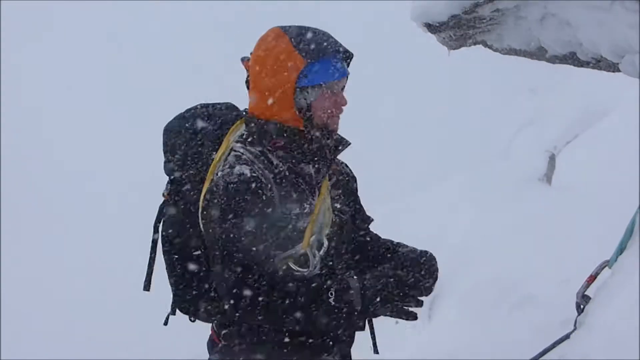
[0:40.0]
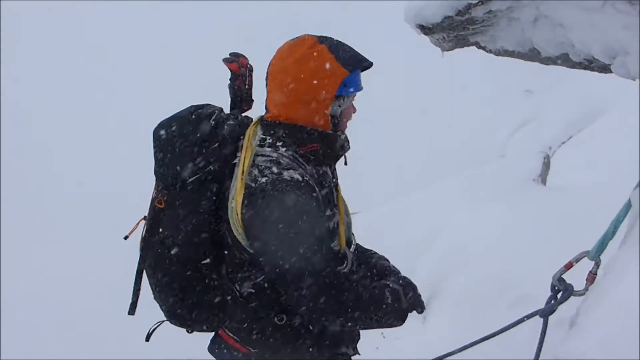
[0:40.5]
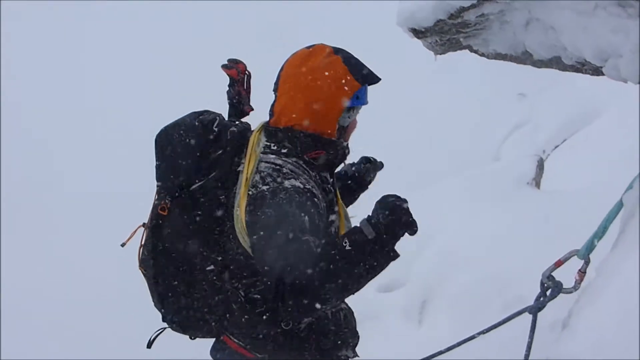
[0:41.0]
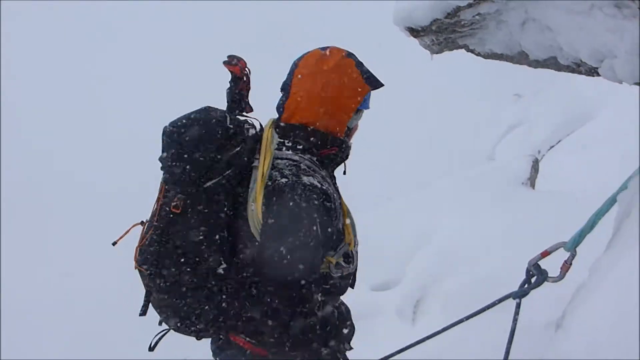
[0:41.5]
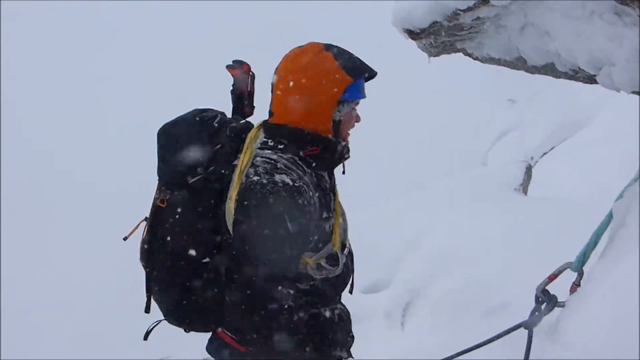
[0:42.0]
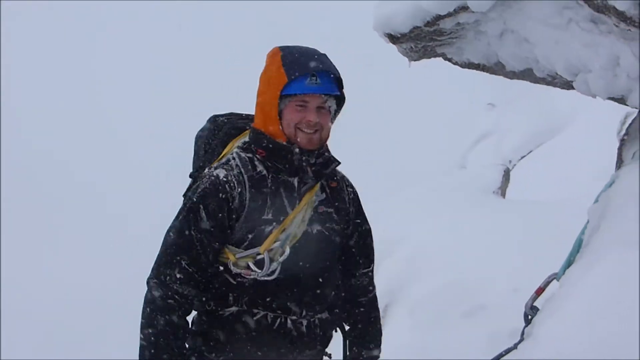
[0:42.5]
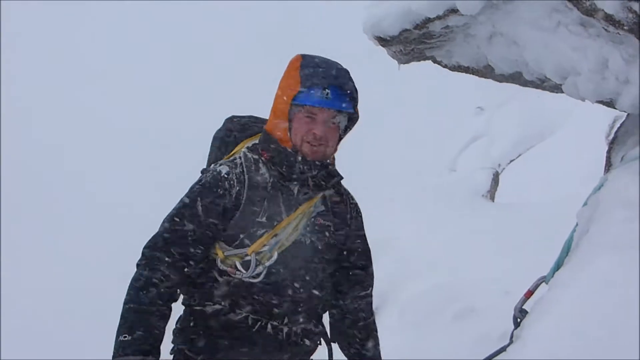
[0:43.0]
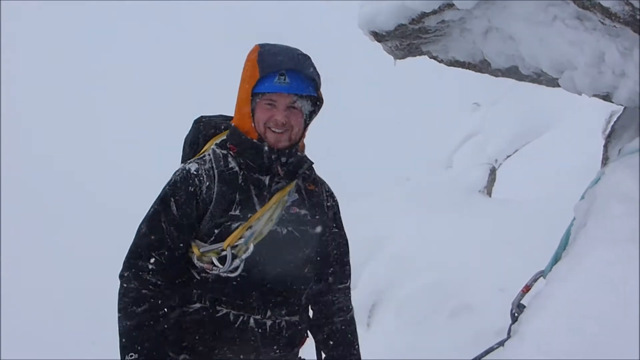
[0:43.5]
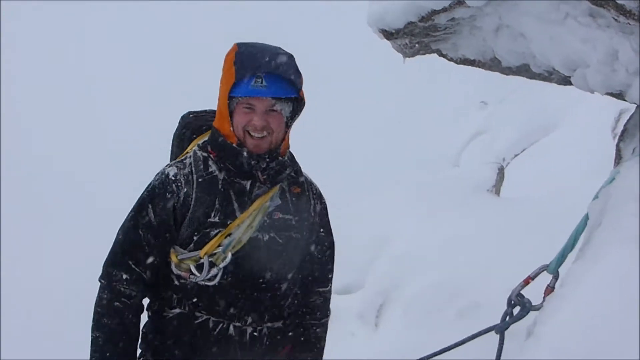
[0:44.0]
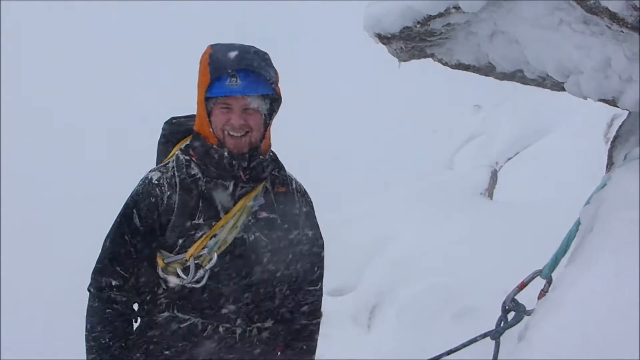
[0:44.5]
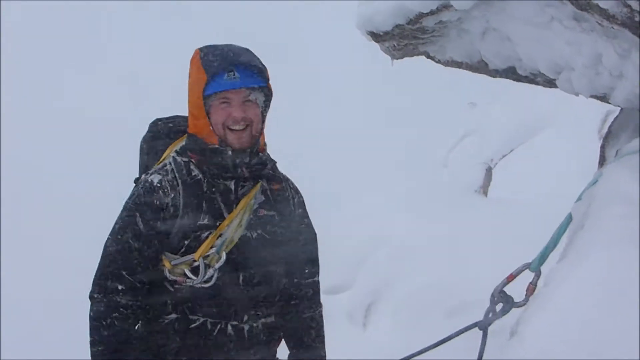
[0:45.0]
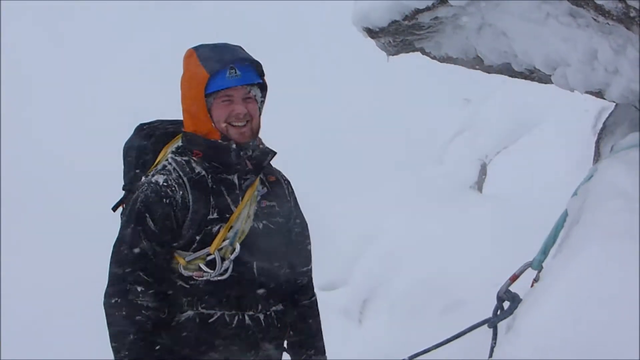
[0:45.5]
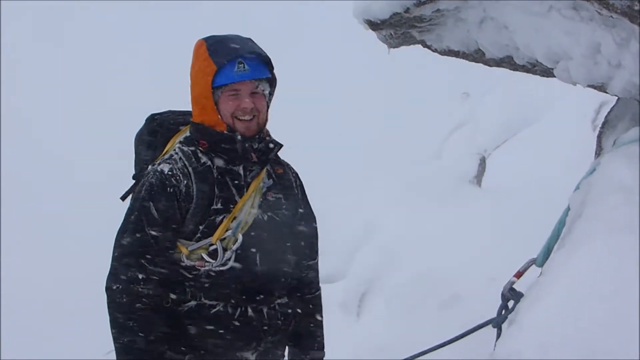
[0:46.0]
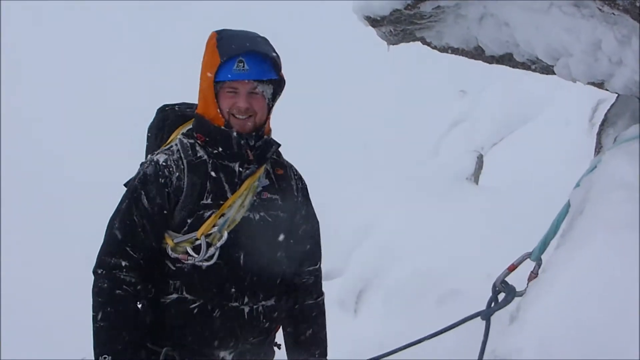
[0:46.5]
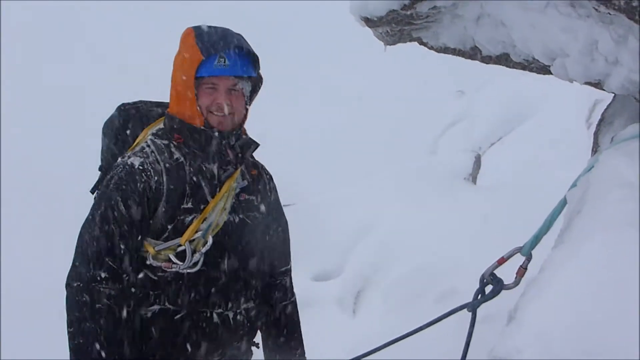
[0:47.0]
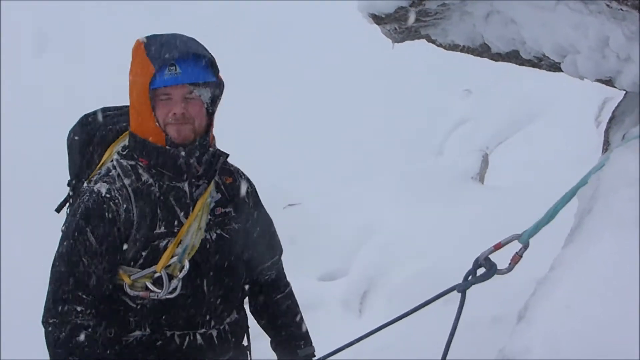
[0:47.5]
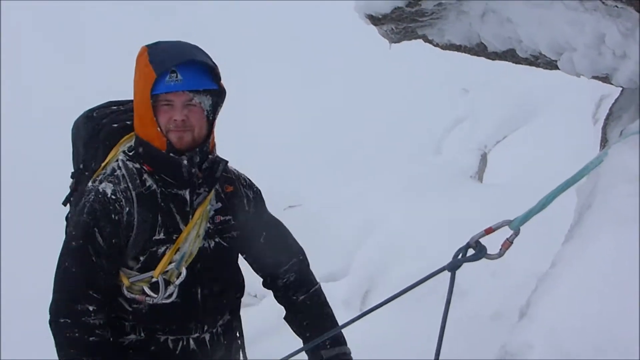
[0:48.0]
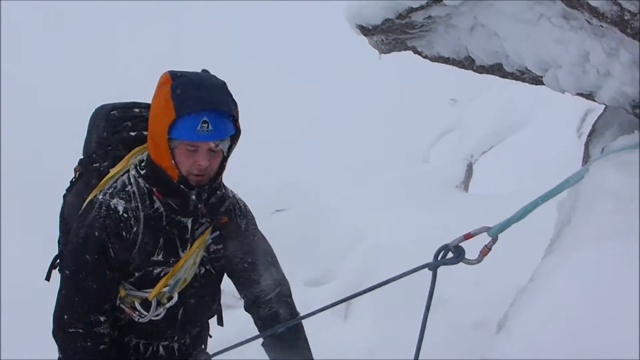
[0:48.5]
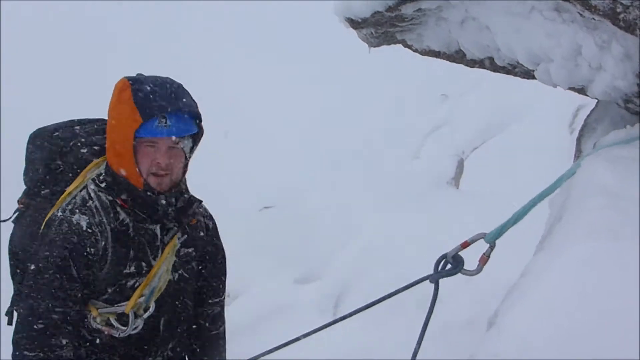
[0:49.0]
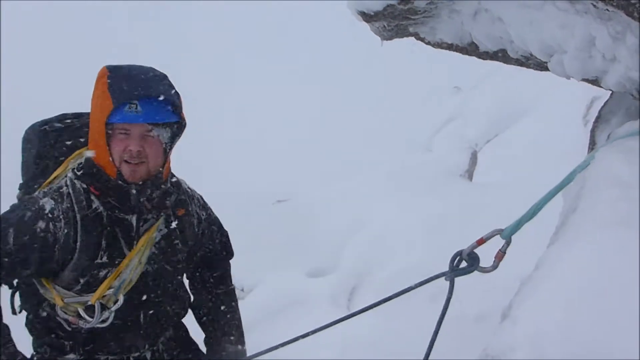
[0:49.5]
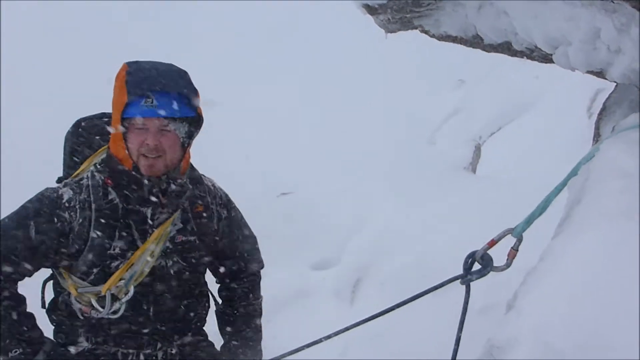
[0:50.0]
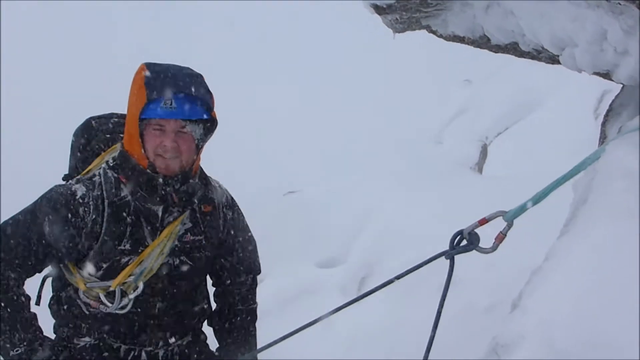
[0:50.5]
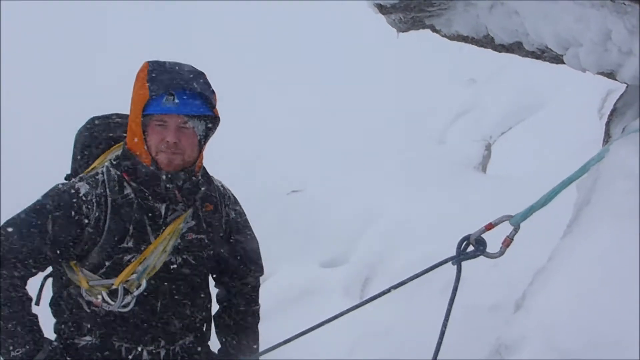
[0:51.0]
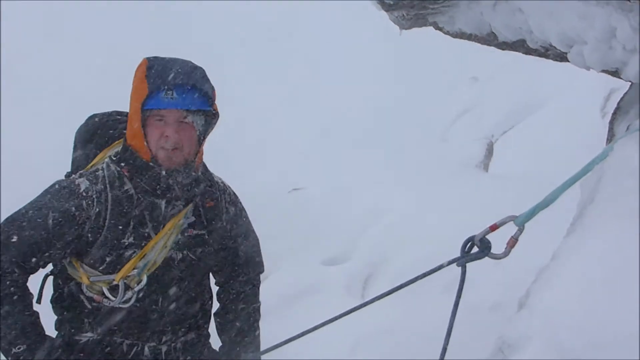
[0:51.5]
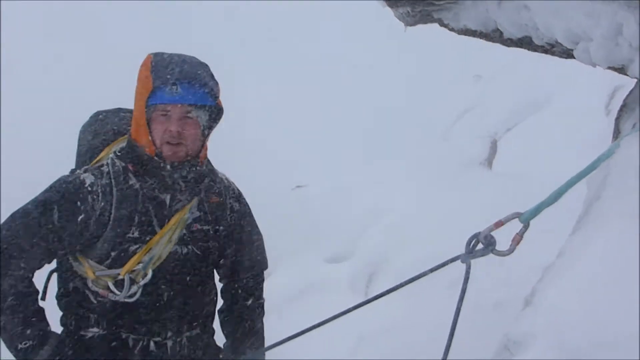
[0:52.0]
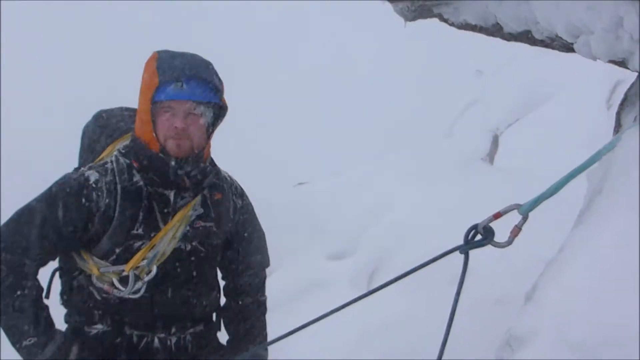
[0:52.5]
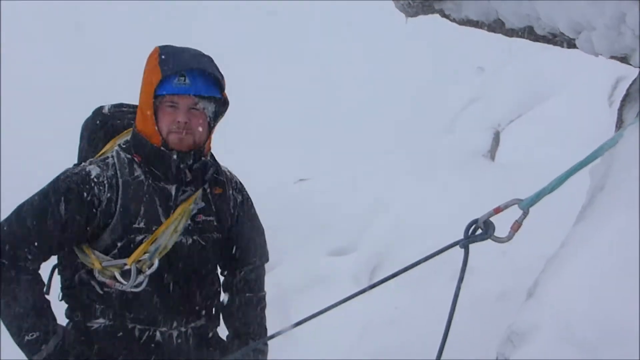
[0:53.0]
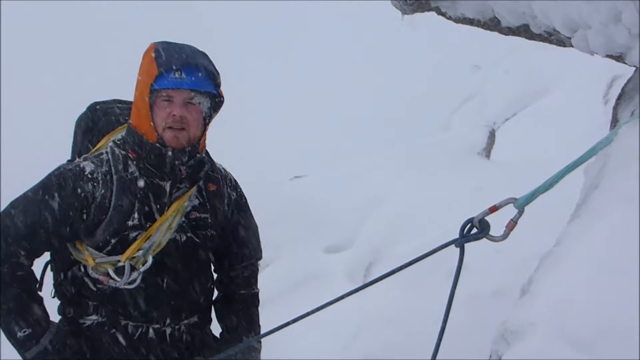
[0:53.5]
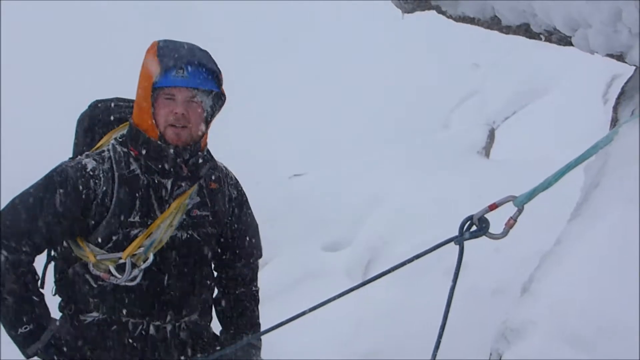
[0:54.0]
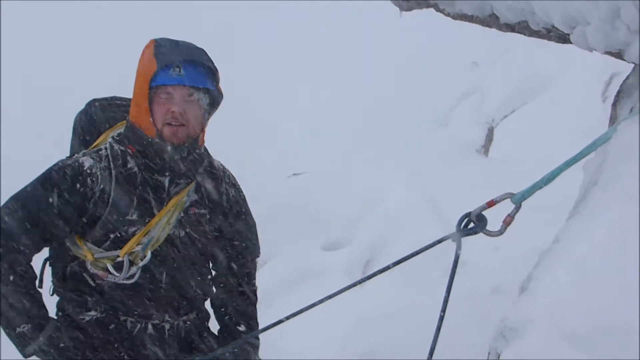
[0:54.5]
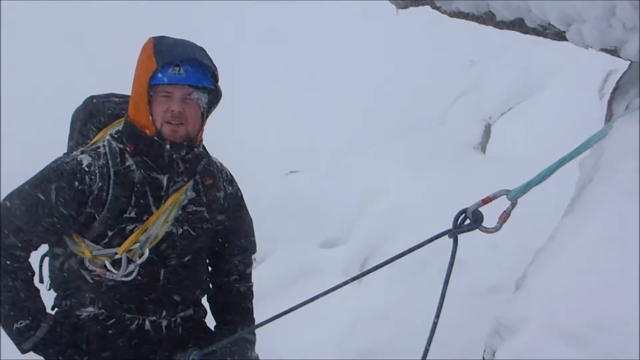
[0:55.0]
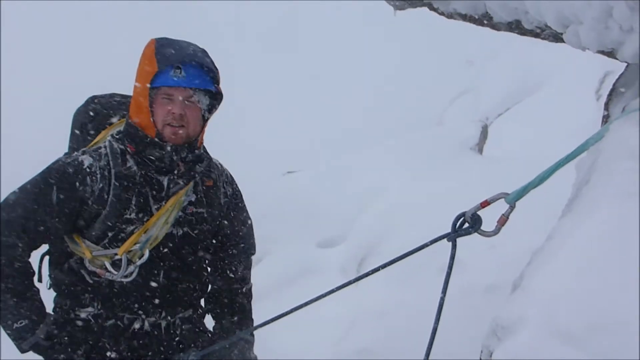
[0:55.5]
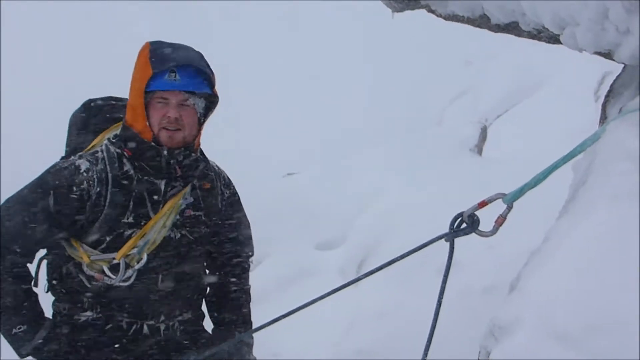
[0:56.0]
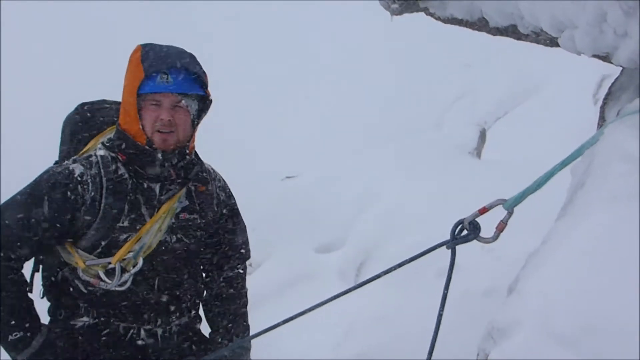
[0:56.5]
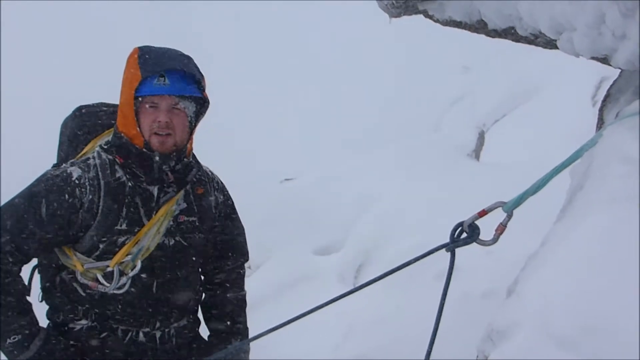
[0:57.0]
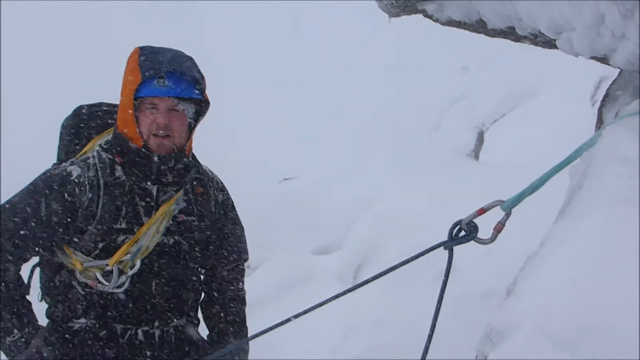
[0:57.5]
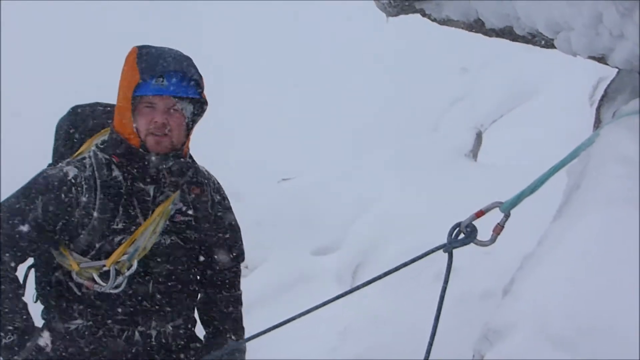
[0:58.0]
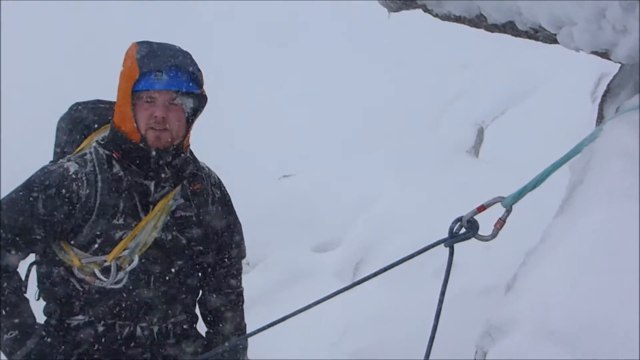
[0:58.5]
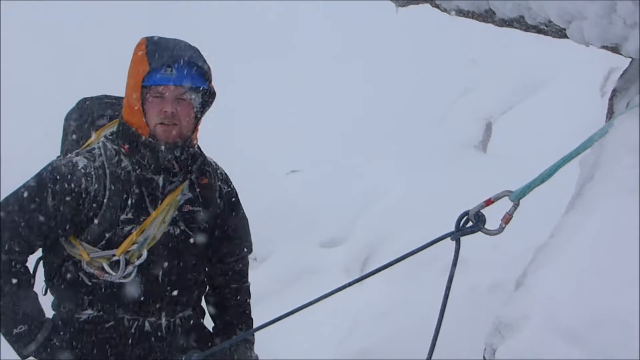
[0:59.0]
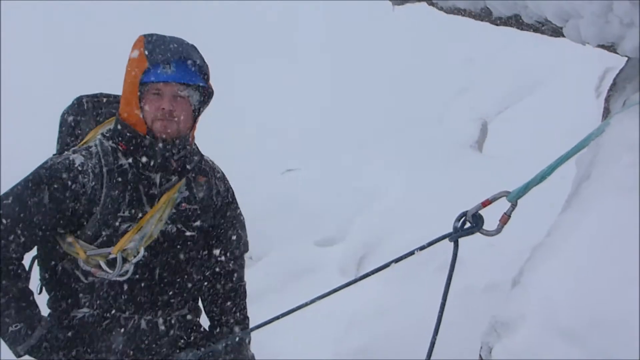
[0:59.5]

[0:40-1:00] The man faces toward the right, showing his profile. His hands are in fists, and he moves them up and down as he speaks. He then turns toward the camera again. He has rope around his chest and shoulder area. He is somewhat smiling as he talks. A rope on the right-hand side looks like it is connected to one of the boulders on the right side of the screen. He stands on the far left side of the screen, looking at the camera and speaking. The snow and sleet almost look like they are moving from left to right rather than falling straight down.